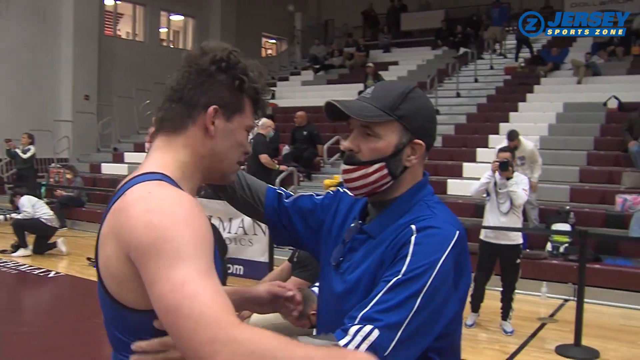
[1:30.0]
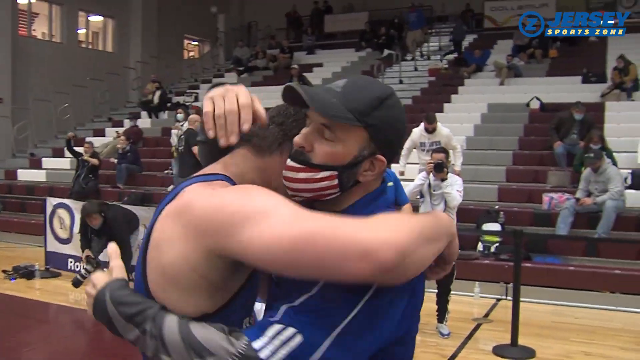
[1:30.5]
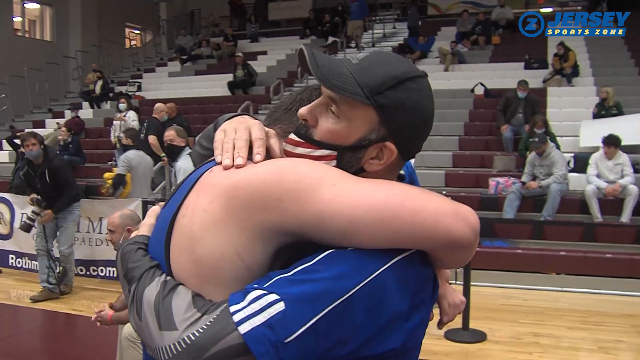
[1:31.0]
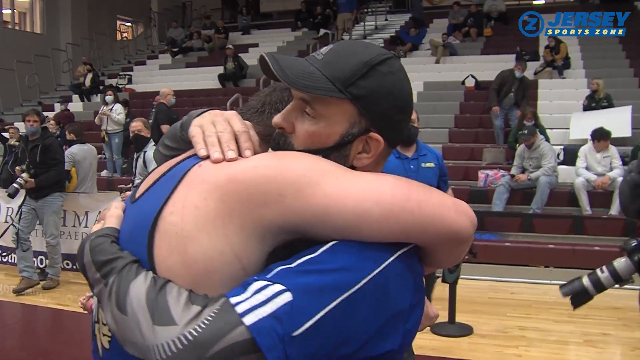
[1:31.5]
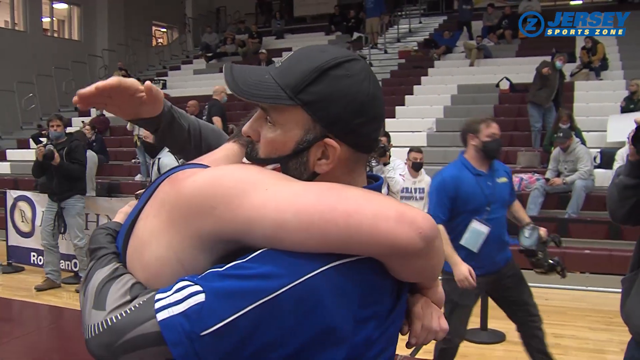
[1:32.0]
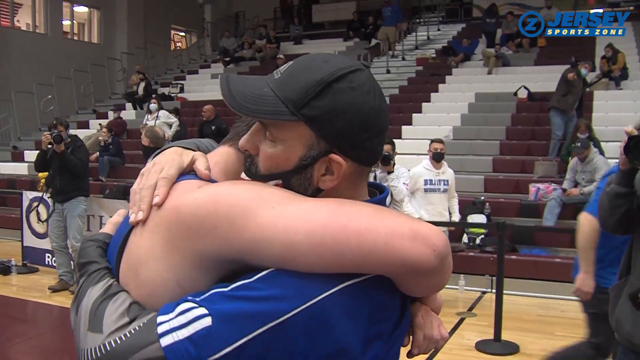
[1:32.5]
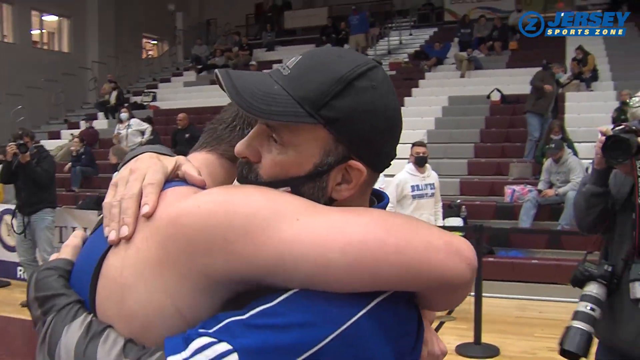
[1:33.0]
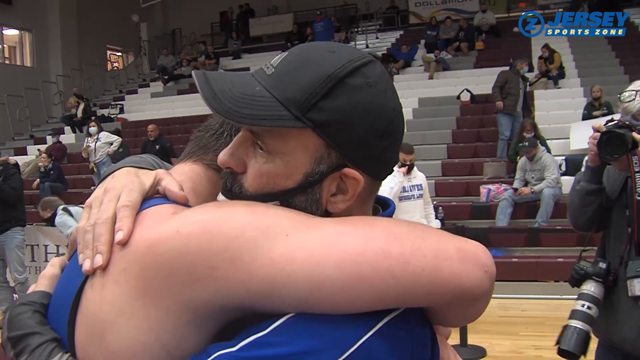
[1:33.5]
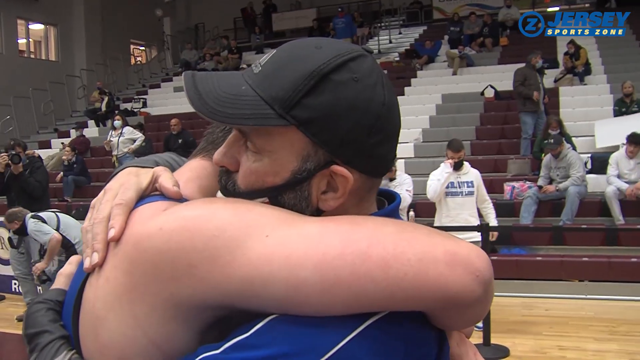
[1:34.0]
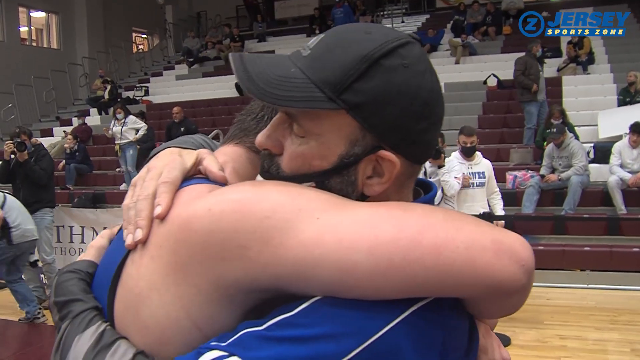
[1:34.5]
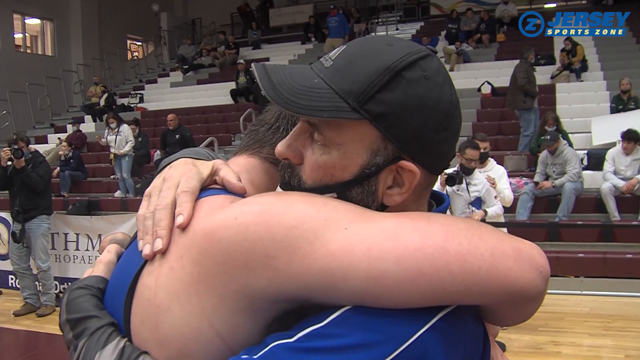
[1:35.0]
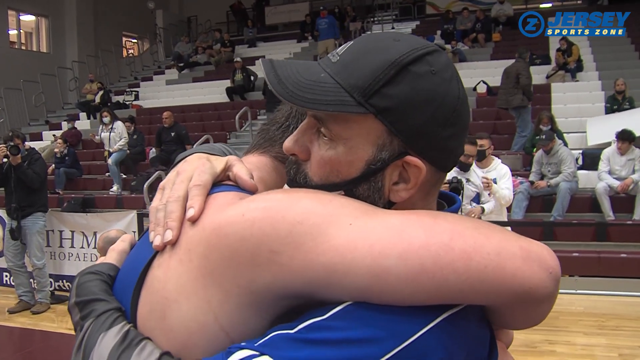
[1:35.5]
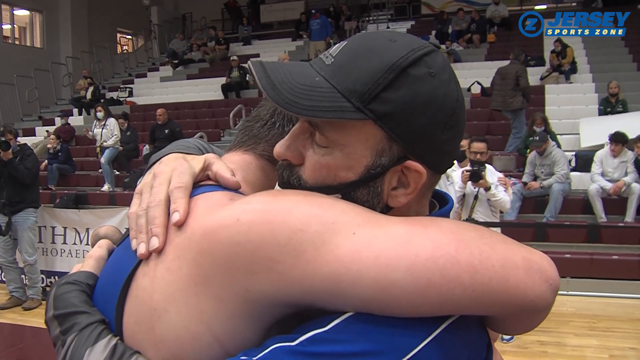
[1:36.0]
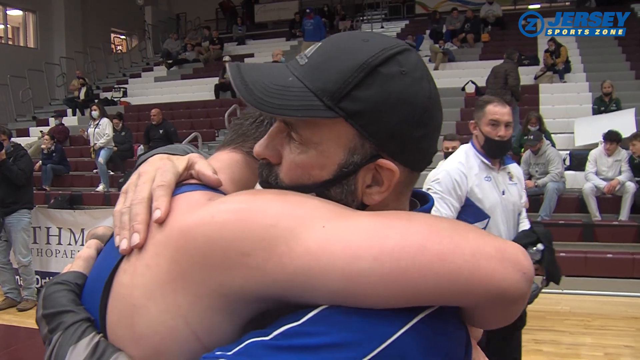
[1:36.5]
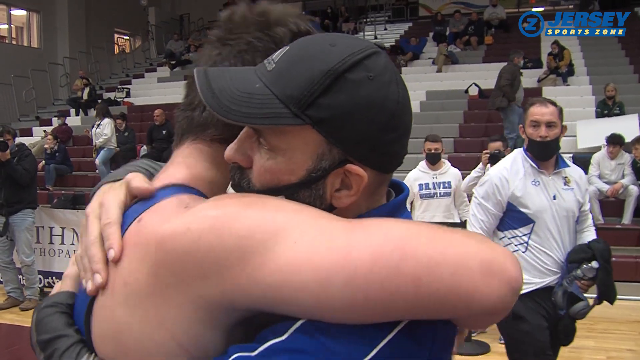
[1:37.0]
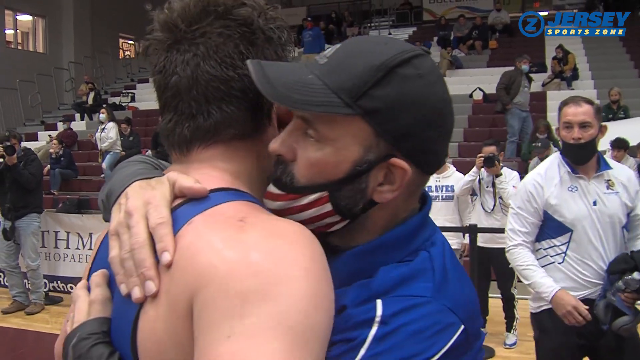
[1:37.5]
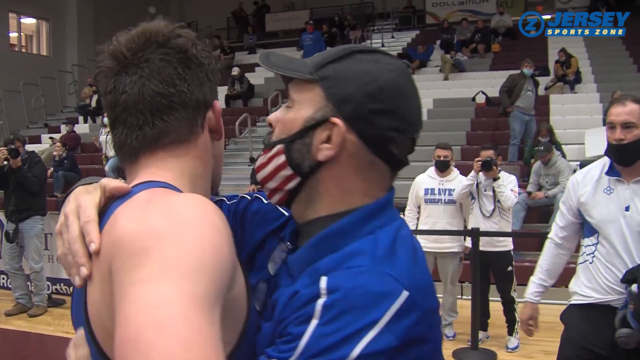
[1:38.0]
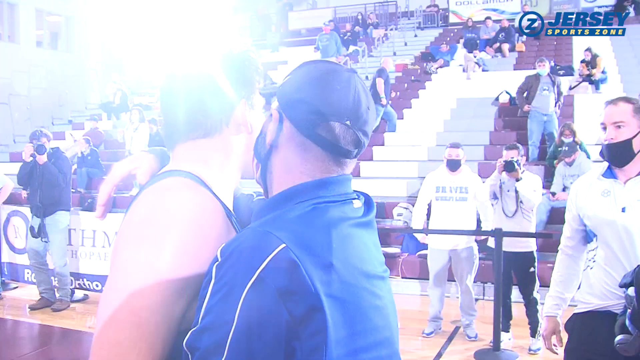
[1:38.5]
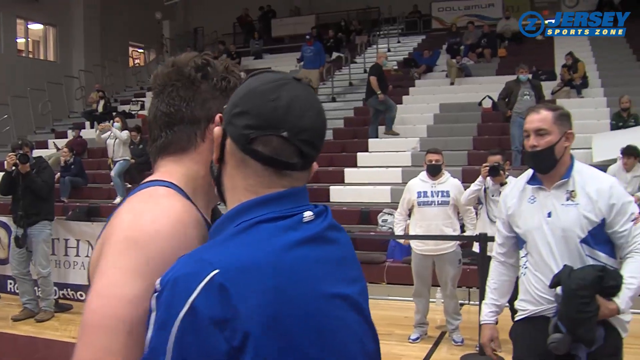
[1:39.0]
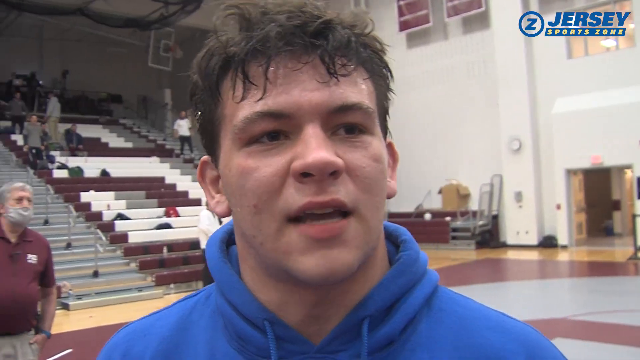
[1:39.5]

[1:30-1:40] Champion Mike Misita gets an embracing hug from a man wearing a black baseball hat and an American flag mask that covers just his mouth and goes over his ears. Behind them, various people in the rather sparse stands are taking pictures. The video then shifts back to an up-close discussion with Mike Misita, the New Jersey 220-pound state wrestling champion. The bleachers in the background rise upward and are maroon, white and gray, with a stair row up the middle that has a rail.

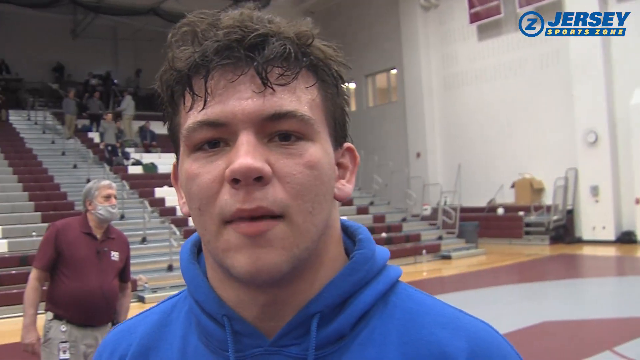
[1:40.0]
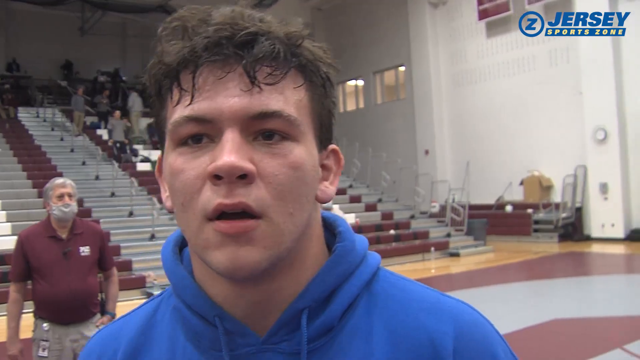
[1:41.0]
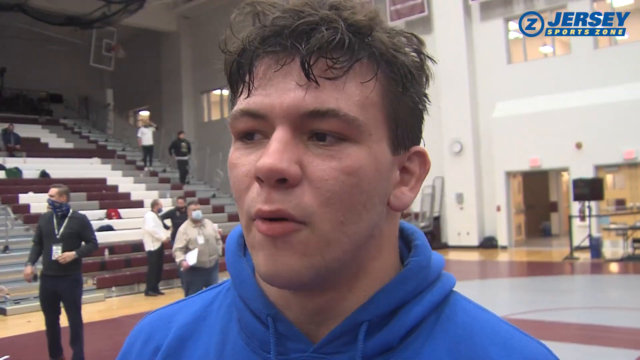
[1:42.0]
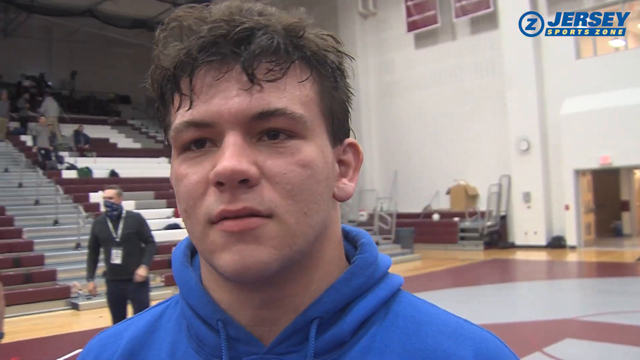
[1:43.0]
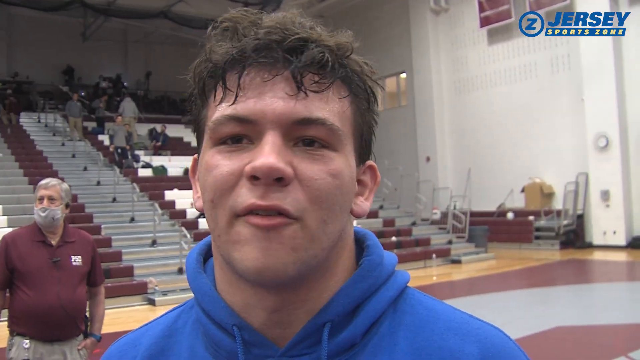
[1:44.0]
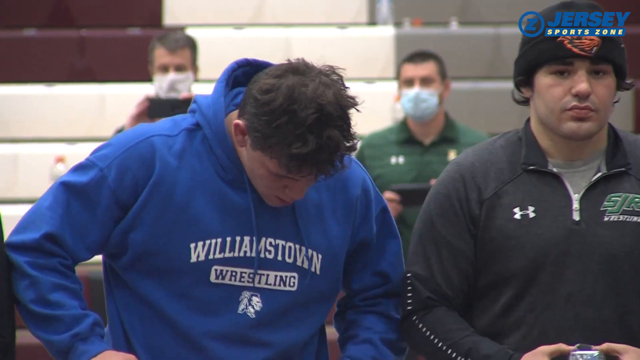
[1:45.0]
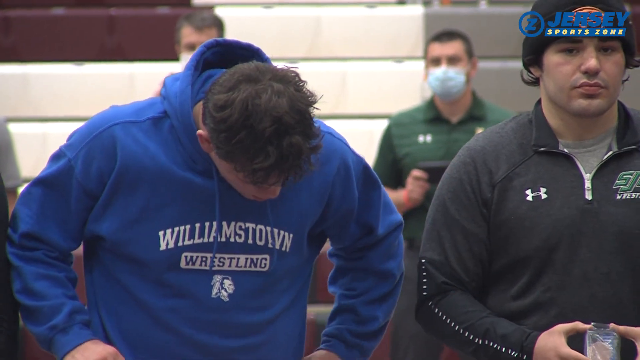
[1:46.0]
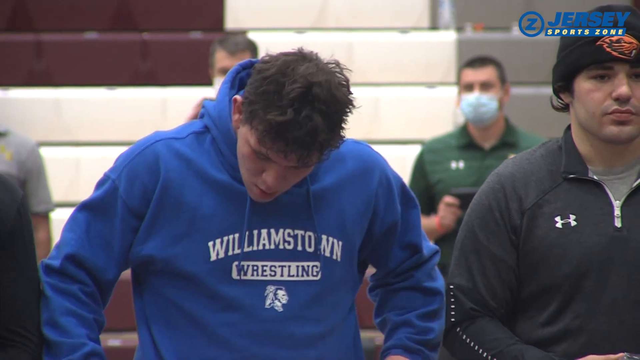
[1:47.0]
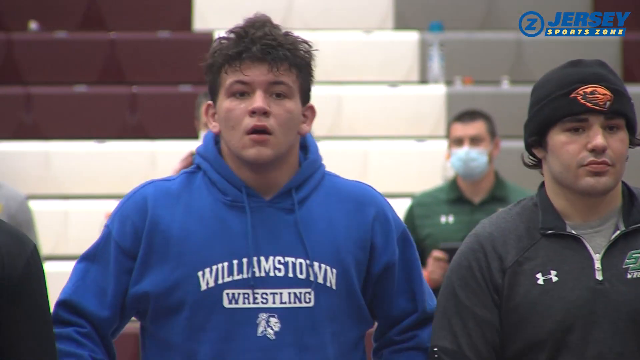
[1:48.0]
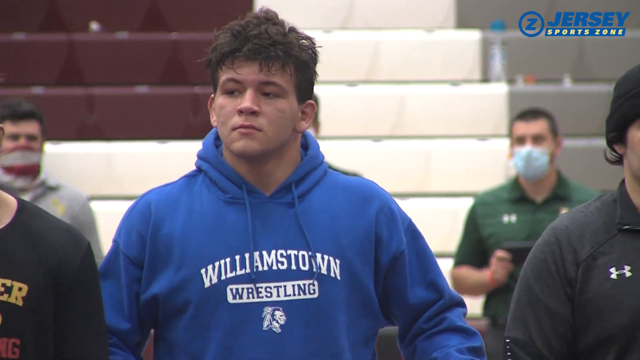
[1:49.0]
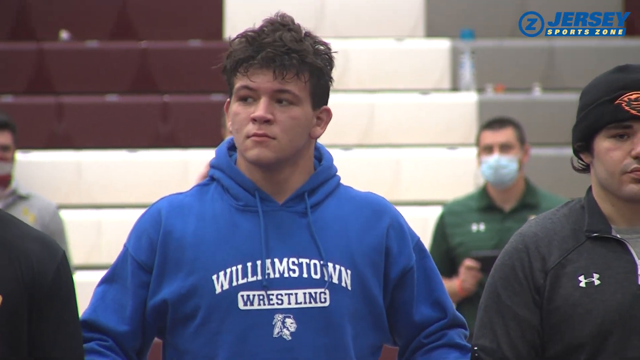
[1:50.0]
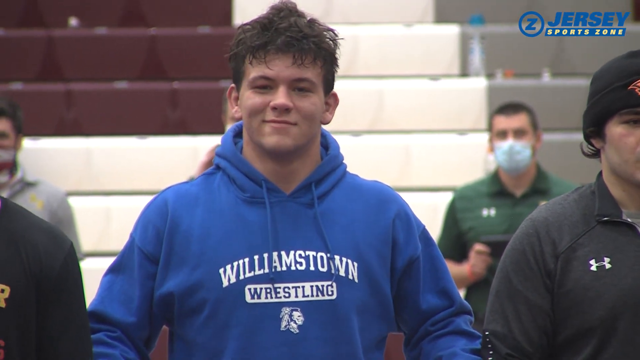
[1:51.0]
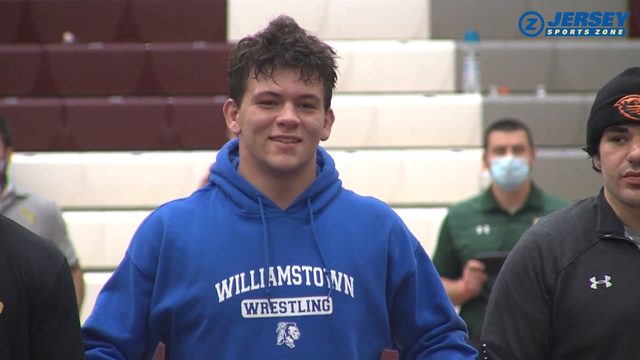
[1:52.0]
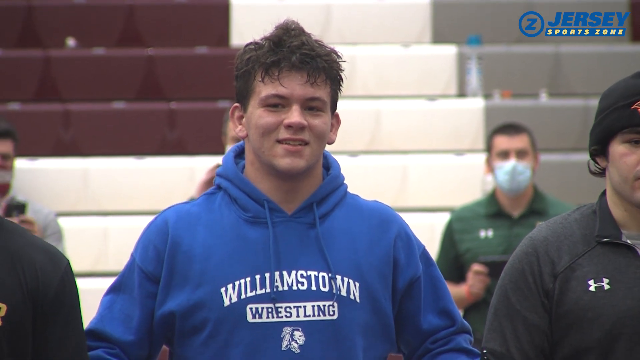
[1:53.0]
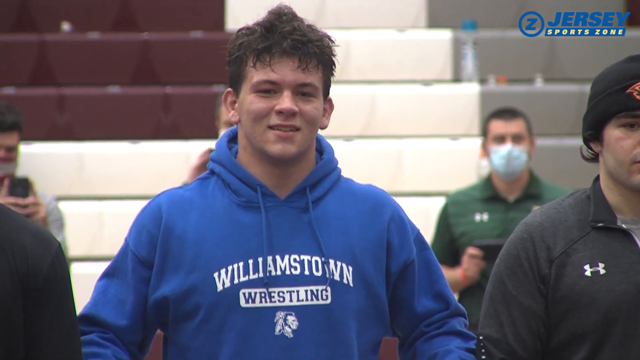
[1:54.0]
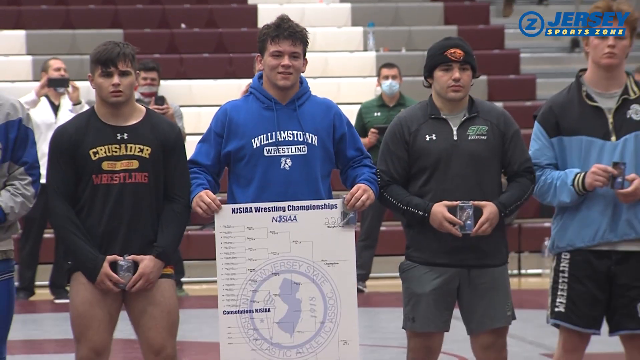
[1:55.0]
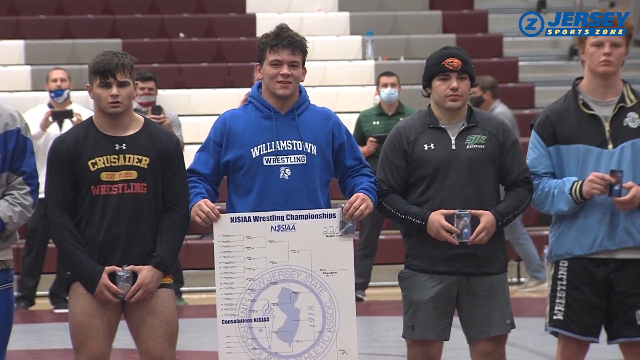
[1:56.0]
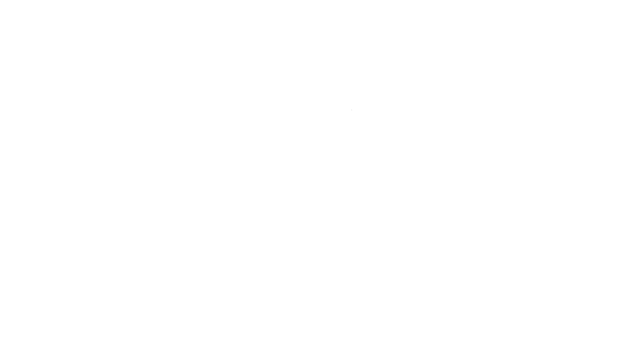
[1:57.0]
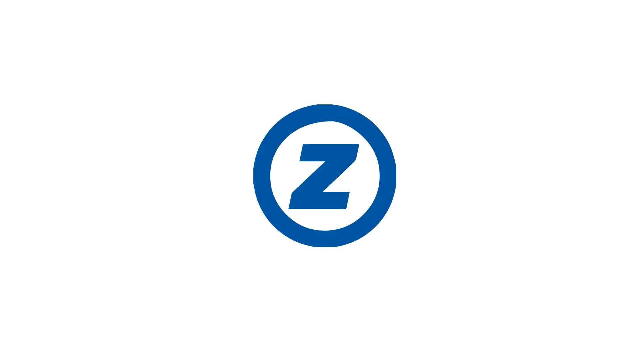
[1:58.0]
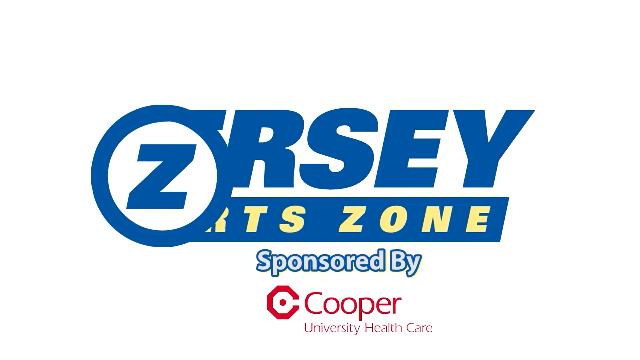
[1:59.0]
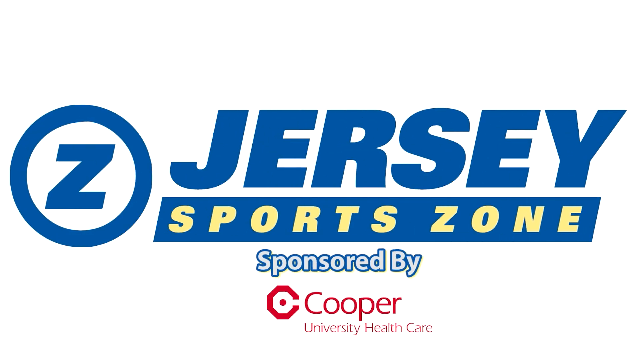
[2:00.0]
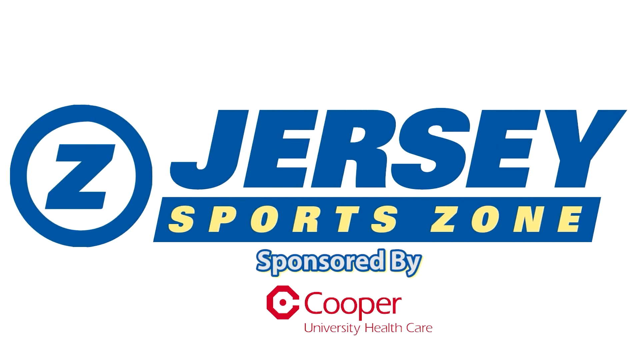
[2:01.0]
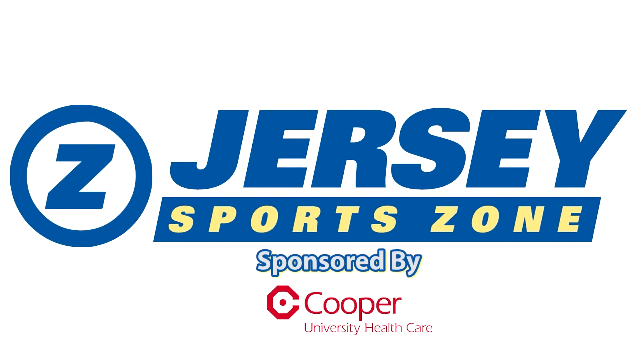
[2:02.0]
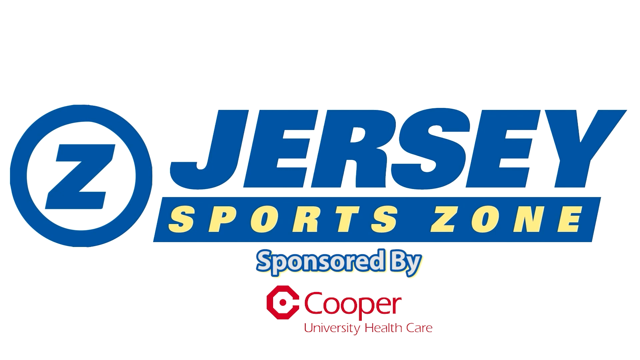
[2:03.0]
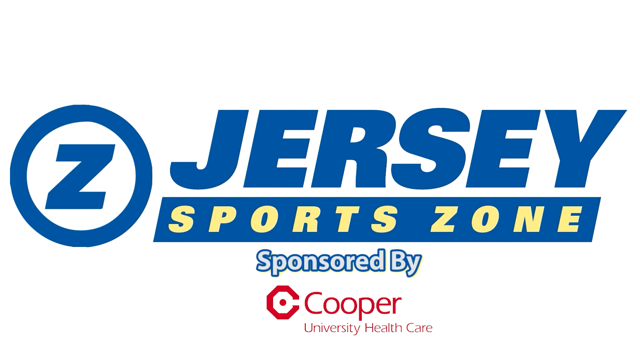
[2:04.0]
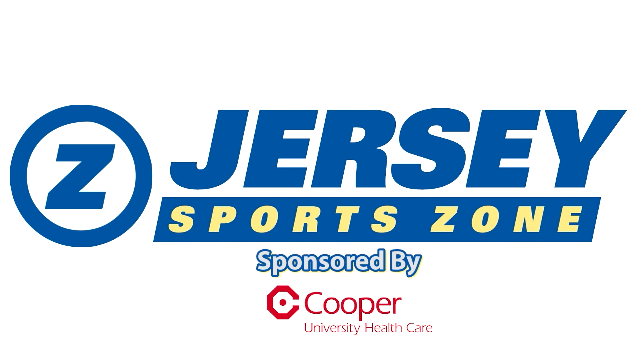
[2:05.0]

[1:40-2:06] An up-close shot shows Mike Misita's head; he wears a blue hooded sweatshirt and talks to whoever is behind the camera, slowly kind of teetering back and forth and slightly shaking his head from side to side. Another video then shows him in a blue "Williamstown Wrestling" sweatshirt next to a man in a black half-zip Under Armour long-sleeve shirt or sweatshirt and a black beanie. Misita has his head down at first and then lifts it as he kind of stands up straight, starts to smile a little, and breathes heavily, visible in his chest. He holds a white and blue poster covering him from about the waist down that reads "NISIAA Wrestling Championships" with a bracket-style diagram below. The video ends on a white screen showing a blue Z in a circle, and then, in a kind of transition, text appears reading "Jersey Sports Zone sponsored by Cooper".